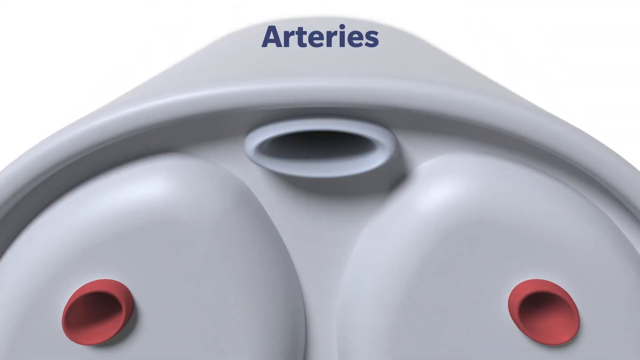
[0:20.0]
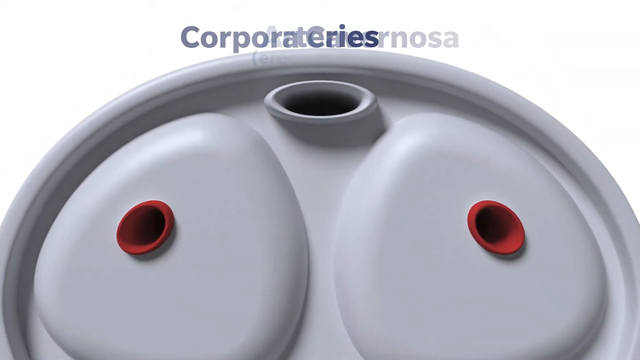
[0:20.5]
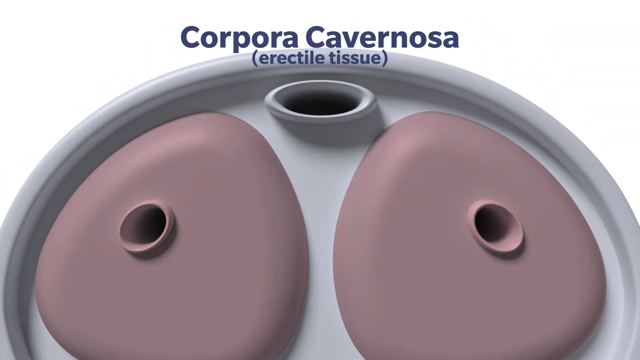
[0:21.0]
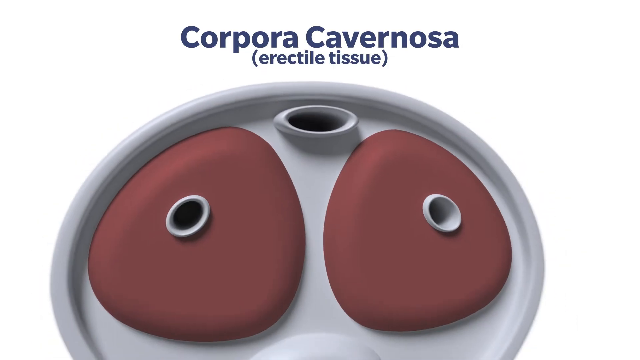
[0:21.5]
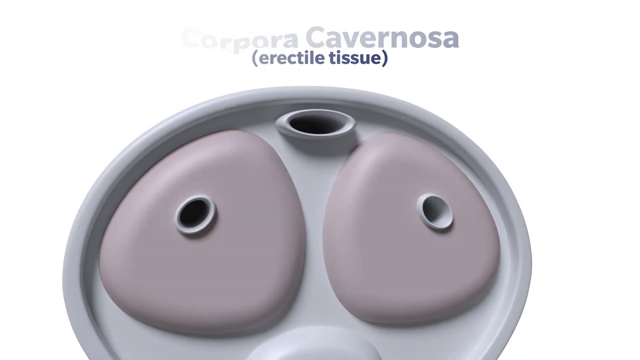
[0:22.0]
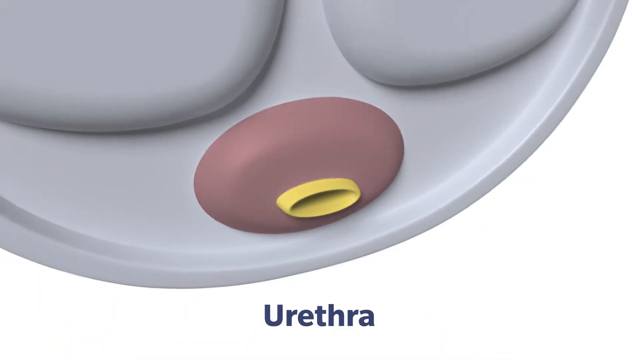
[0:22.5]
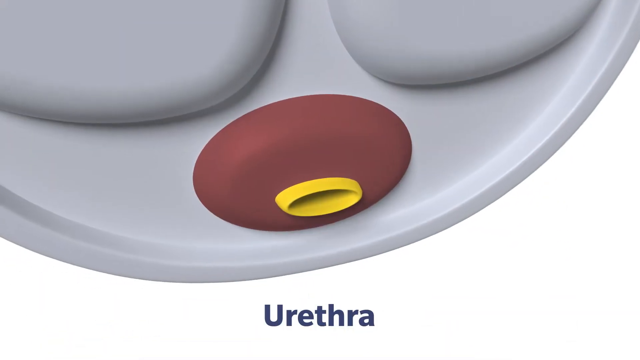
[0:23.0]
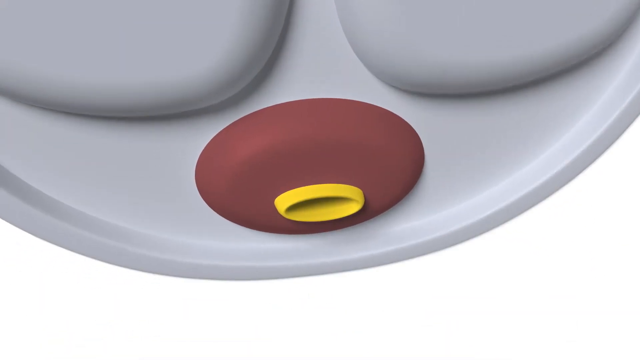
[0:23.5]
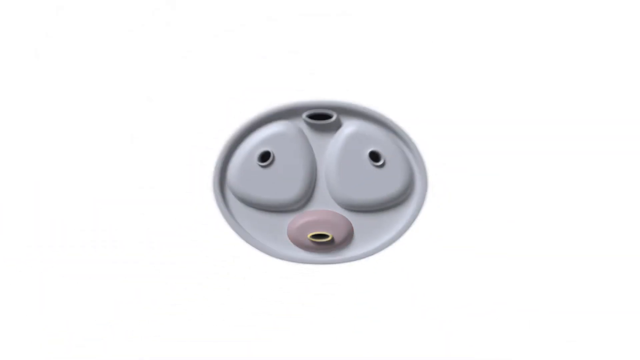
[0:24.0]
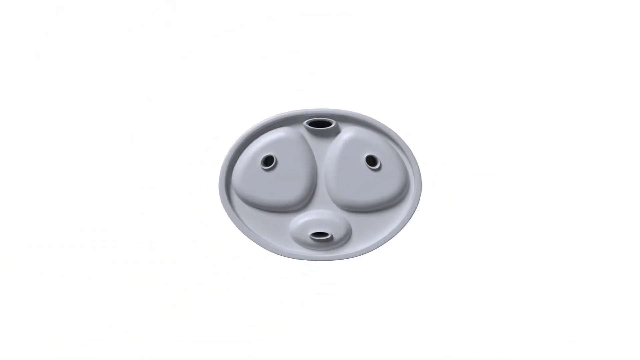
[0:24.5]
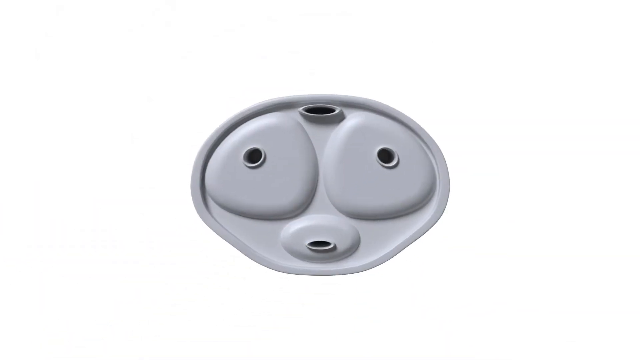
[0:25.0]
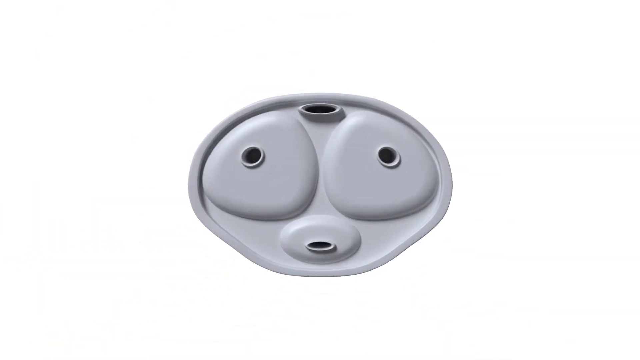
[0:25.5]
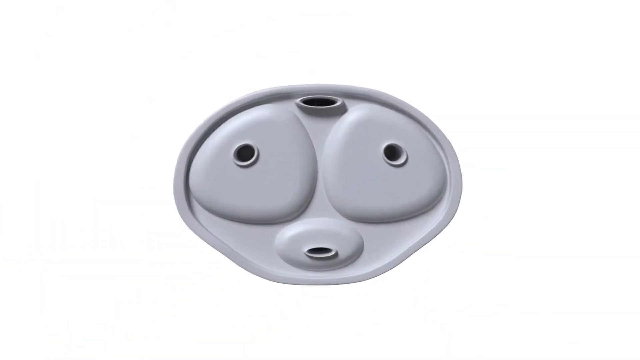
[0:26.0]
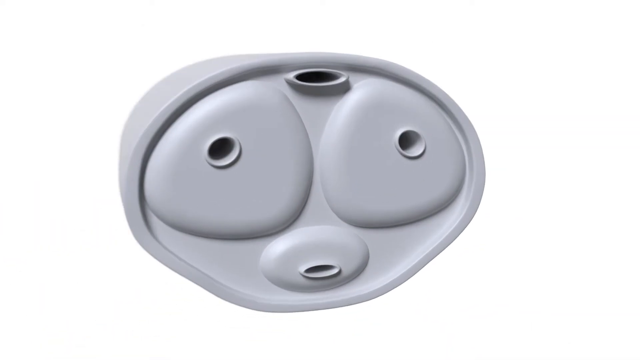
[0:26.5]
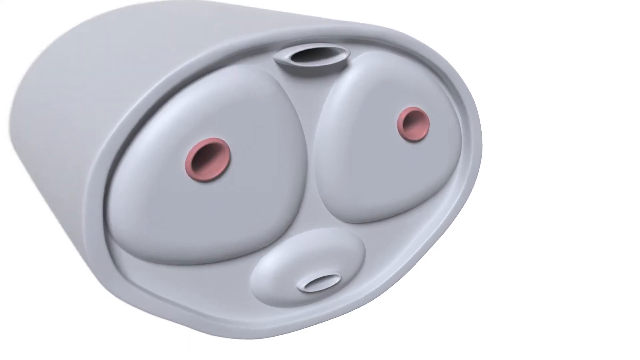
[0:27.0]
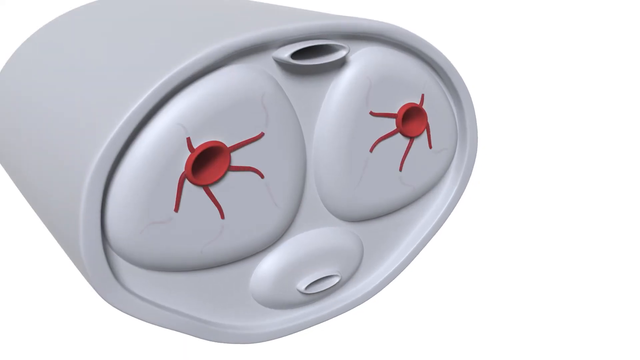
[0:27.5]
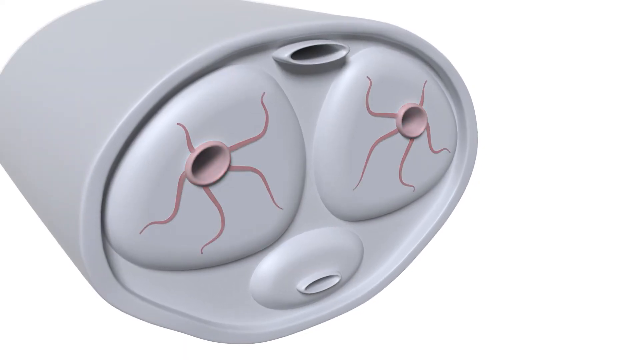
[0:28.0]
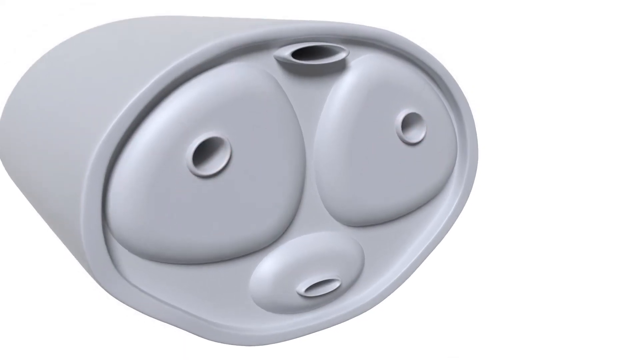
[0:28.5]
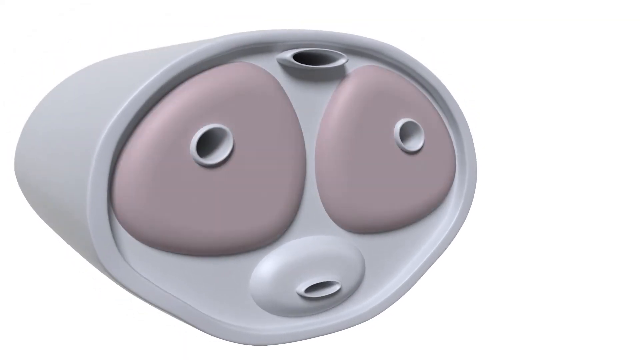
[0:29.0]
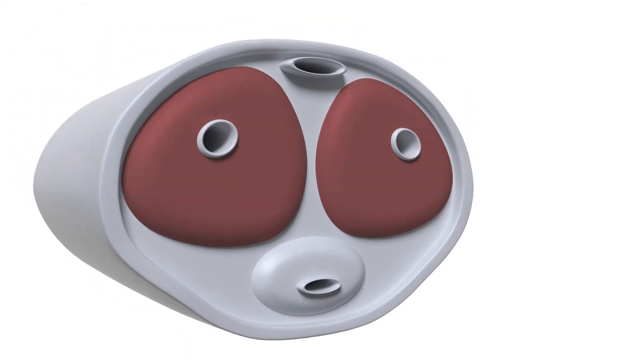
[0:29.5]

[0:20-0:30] The device is shown with the arteries labeled; the text says "arteries," and the urethra is also shown. The layout has something at the top, the two arteries side by side, and the urethra at the bottom, all on kind of a plastic background with a white bar background. The arteries look like they are becoming inflamed or have blood vessels running through them, appearing bloodshot and unhealthy, as a kind of spider-web bloodshot pattern emerges and then disappears.